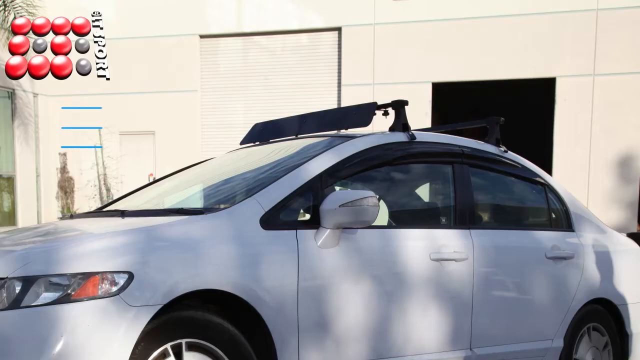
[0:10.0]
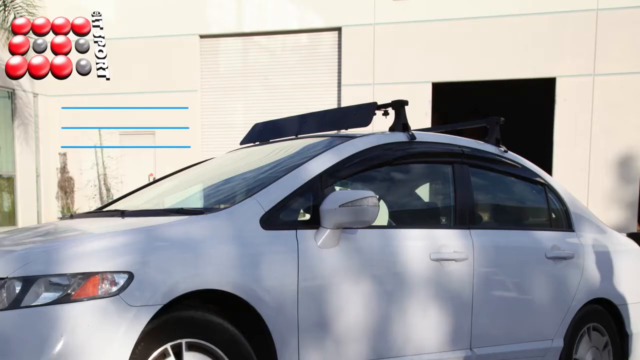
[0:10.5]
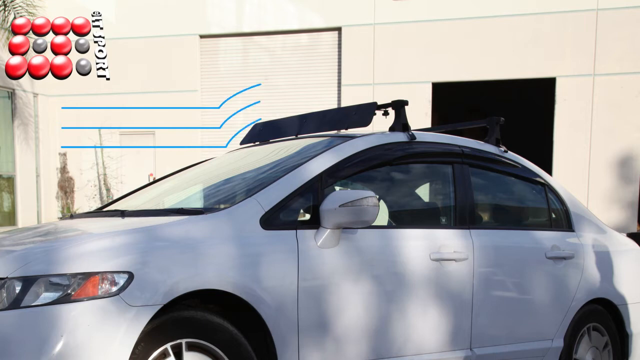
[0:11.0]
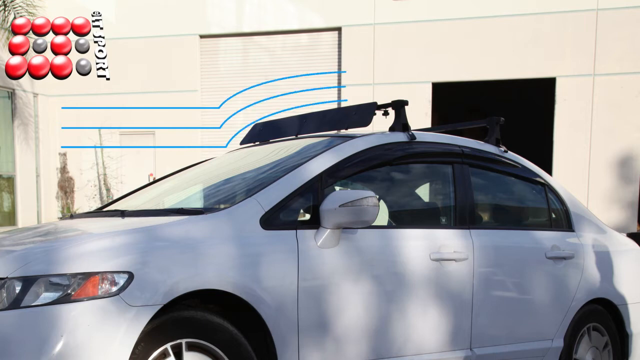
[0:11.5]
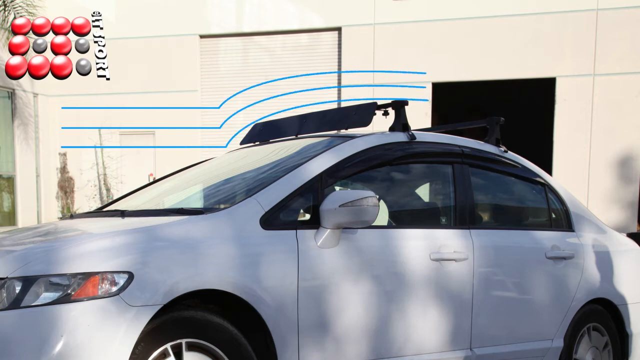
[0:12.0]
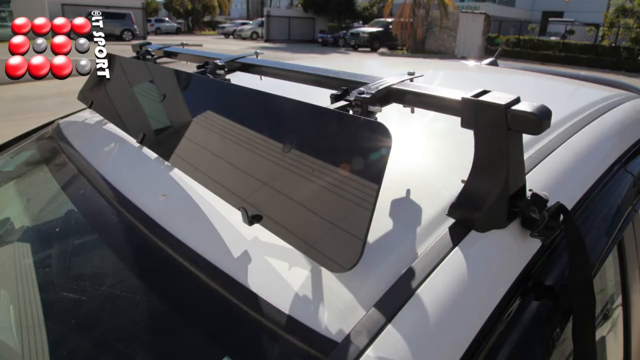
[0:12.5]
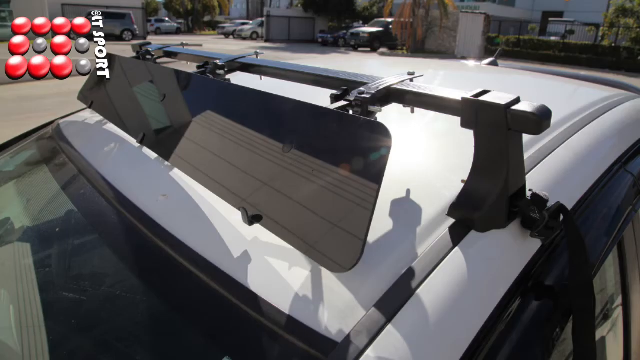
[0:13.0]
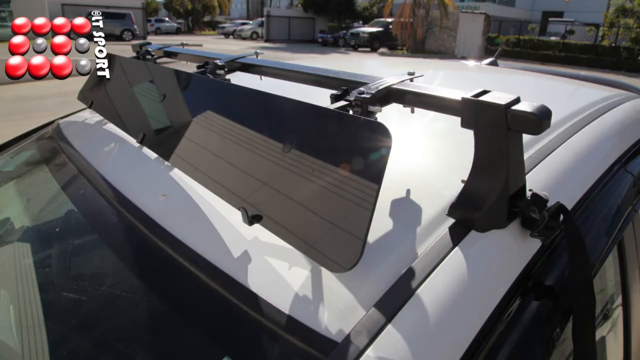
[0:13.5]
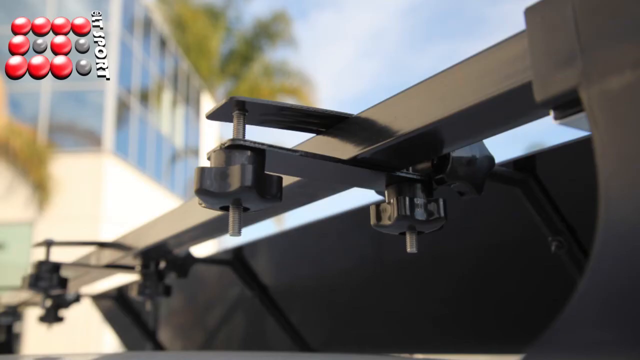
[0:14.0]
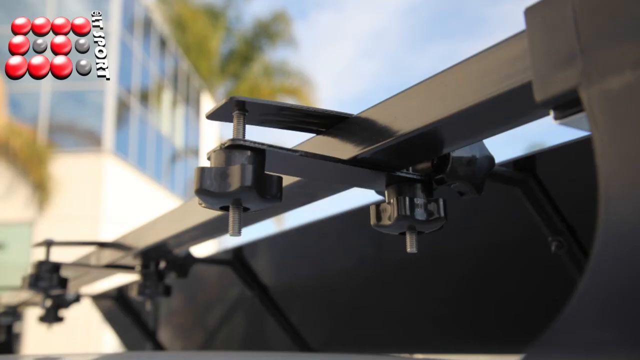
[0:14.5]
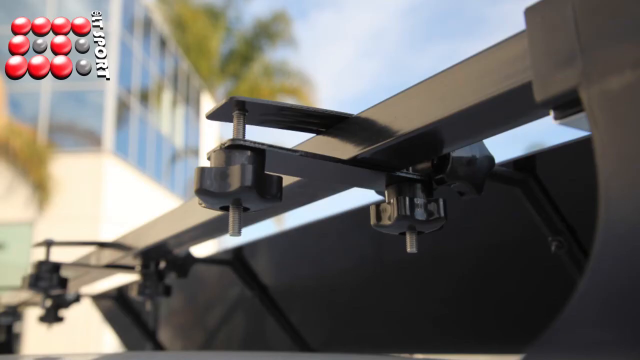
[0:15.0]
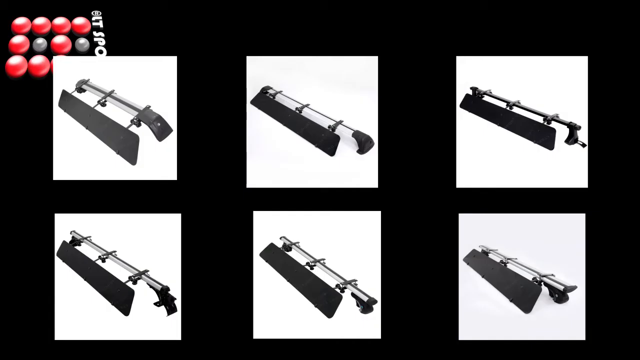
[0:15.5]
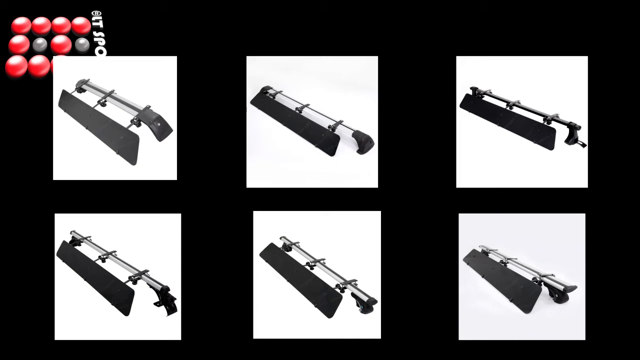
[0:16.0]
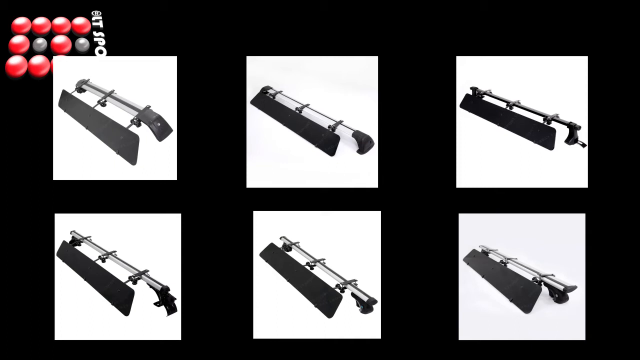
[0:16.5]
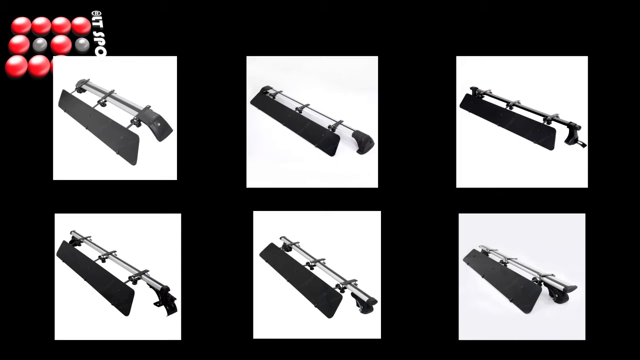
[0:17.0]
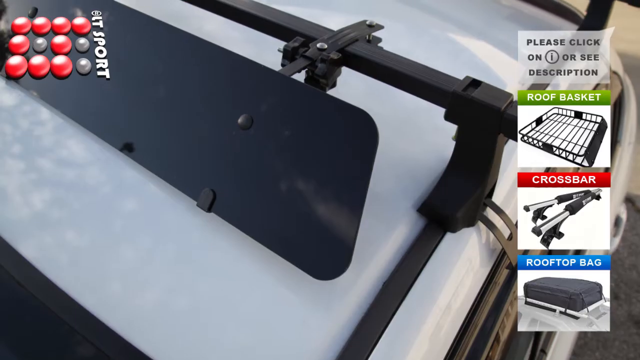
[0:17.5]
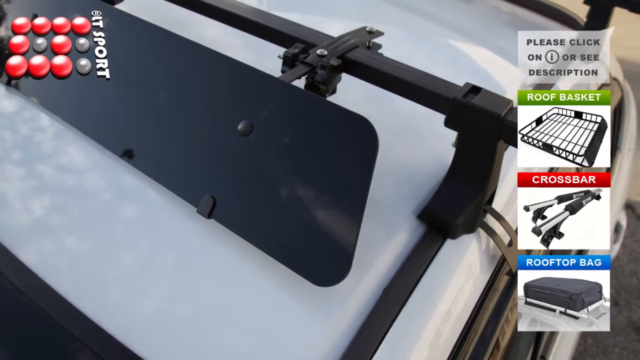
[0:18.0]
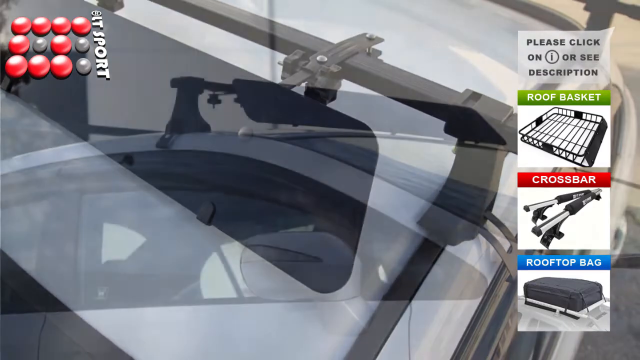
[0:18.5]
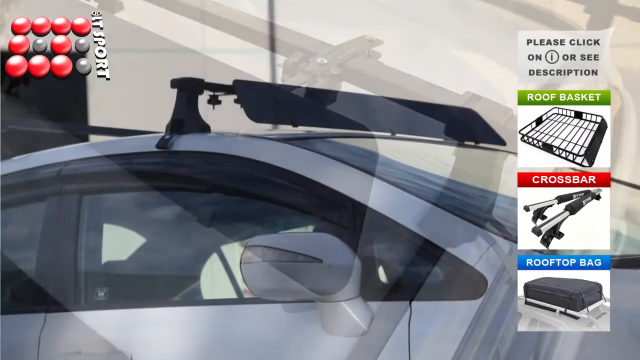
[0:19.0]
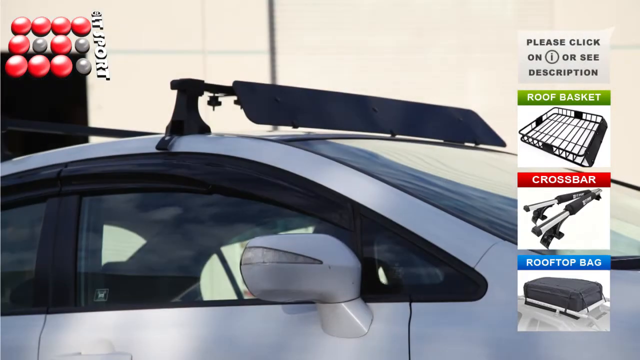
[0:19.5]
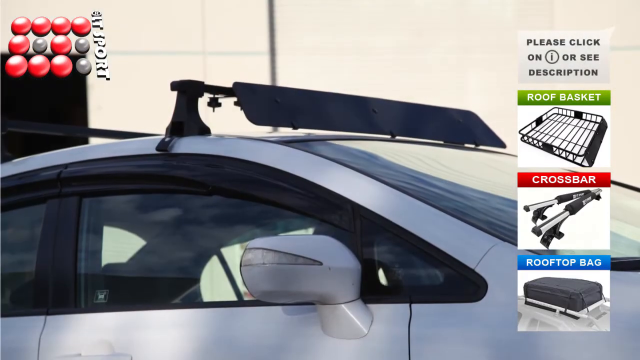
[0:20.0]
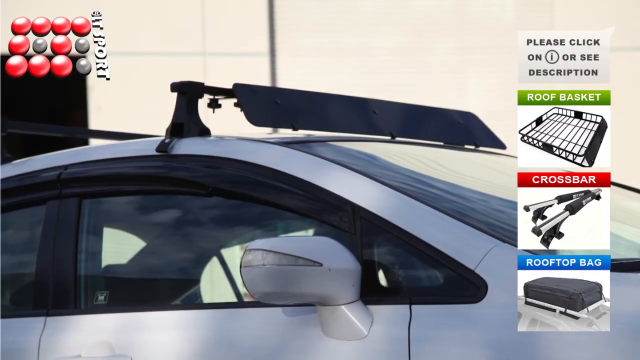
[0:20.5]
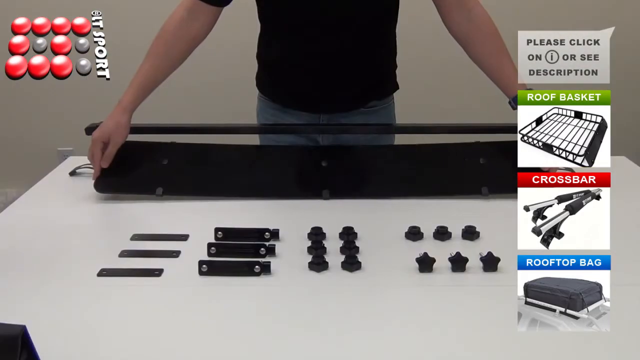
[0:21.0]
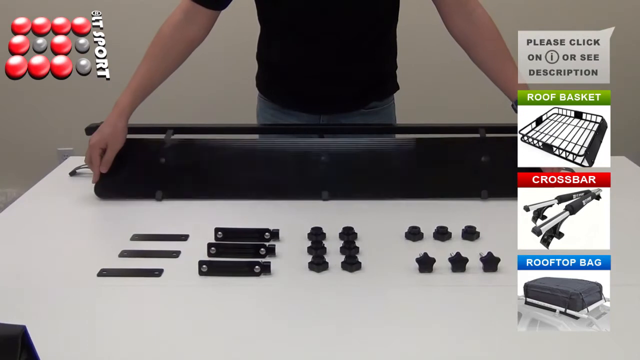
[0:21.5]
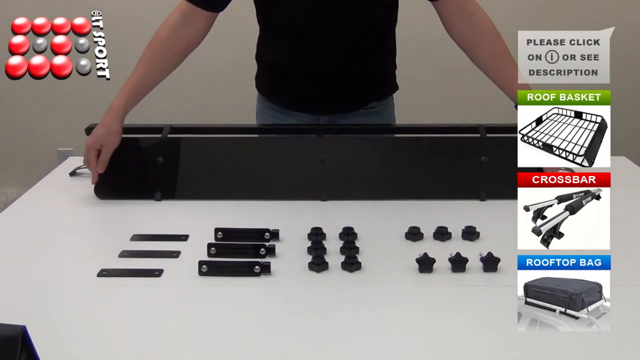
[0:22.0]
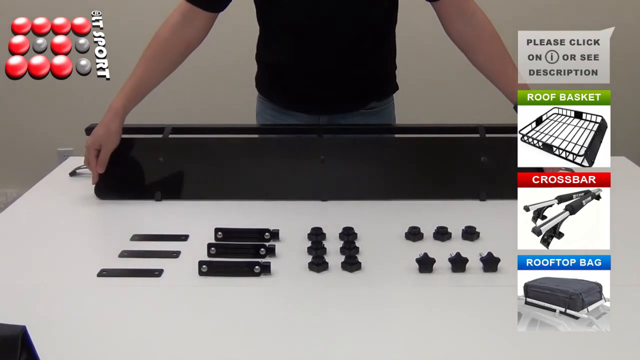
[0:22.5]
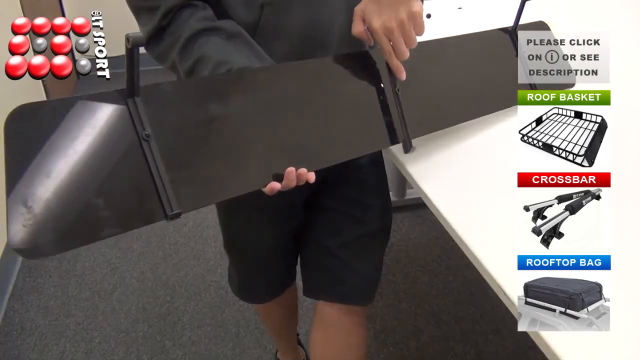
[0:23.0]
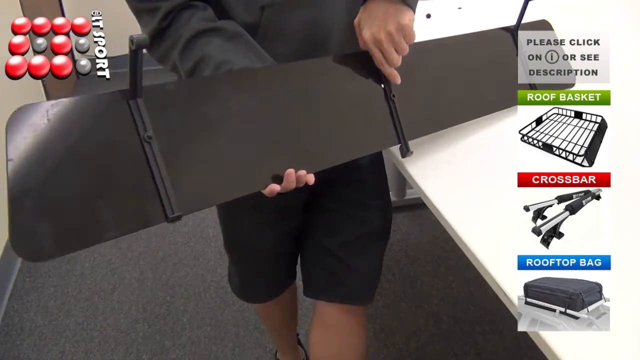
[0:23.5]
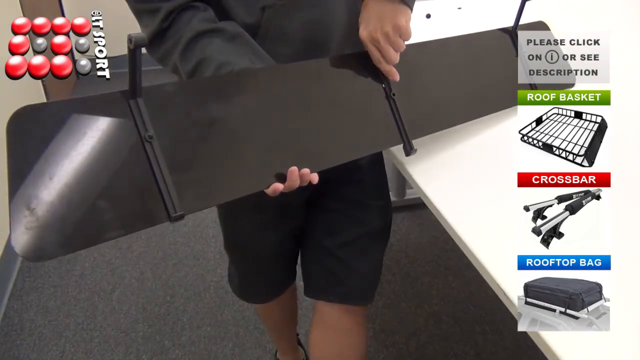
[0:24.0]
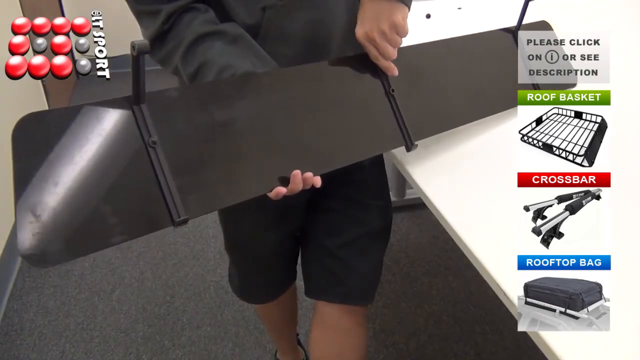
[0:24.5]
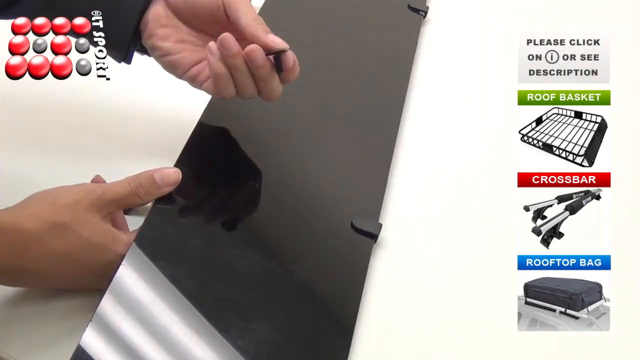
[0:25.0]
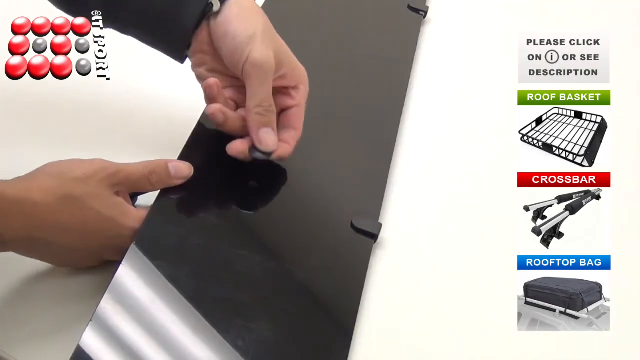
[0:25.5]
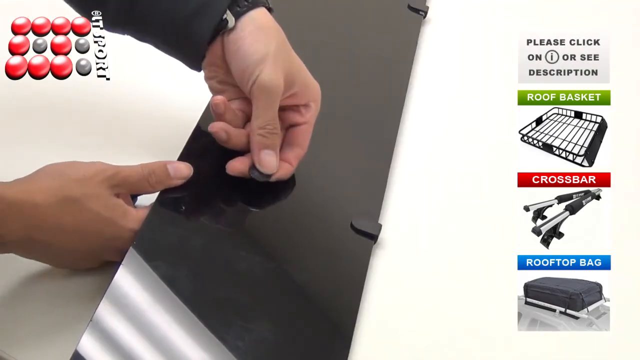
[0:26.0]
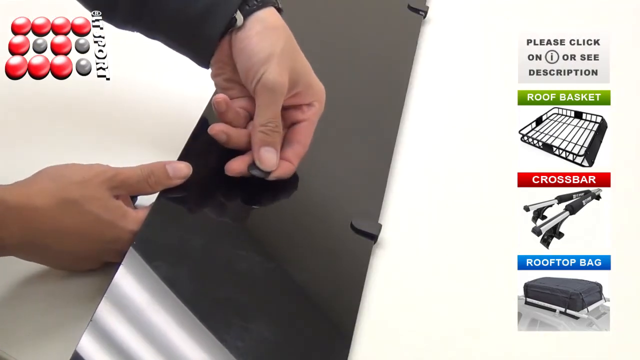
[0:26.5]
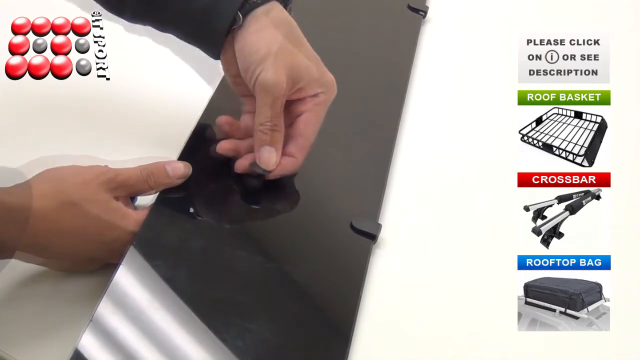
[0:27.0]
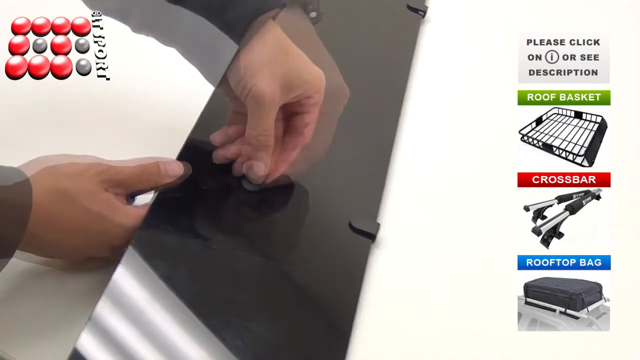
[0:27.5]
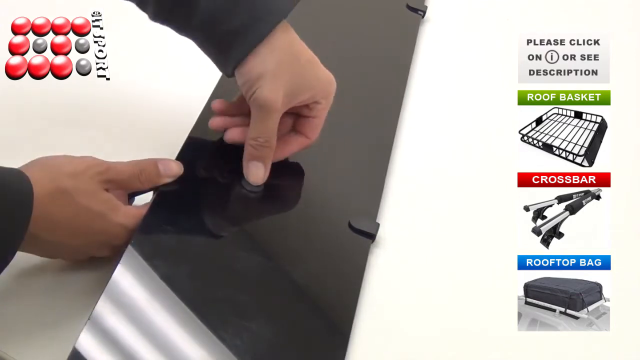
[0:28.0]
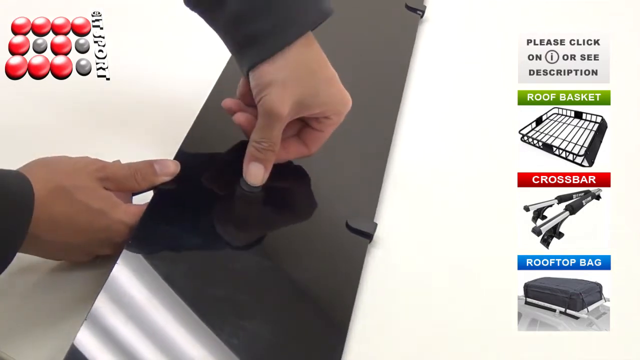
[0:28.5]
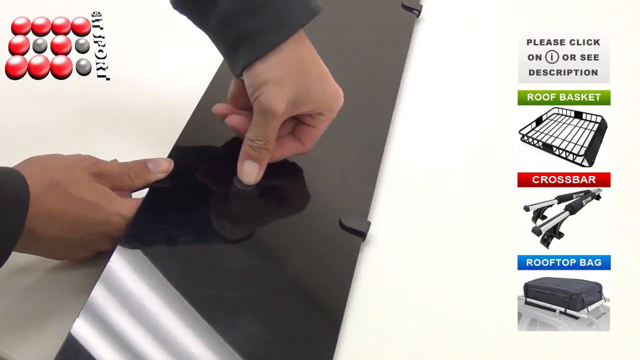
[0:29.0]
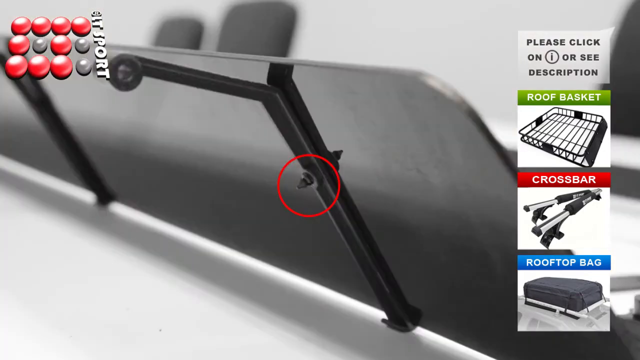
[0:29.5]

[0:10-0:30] The black bar is on the white car and seems to be angled down toward the front, almost touching the windshield. In the background is a tan building that looks like some type of warehouse, with a large open door. Pictures of the bar up close and some drawings are shown, and someone demonstrates what it looks like; it appears to be made of black plastic. The video seems to show how to put it on the car, and some of the tutorial pictures go by very quickly. Possibly some type of magnetic strips go on the underside of the bar, although so far it is not touching the car. There are flashing lights. The white car is shown with a sport logo in the upper left-hand corner, and a few different things appear on the right side of the video, maybe other suggestions.